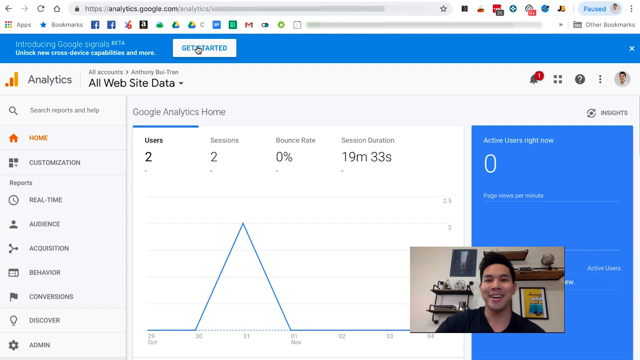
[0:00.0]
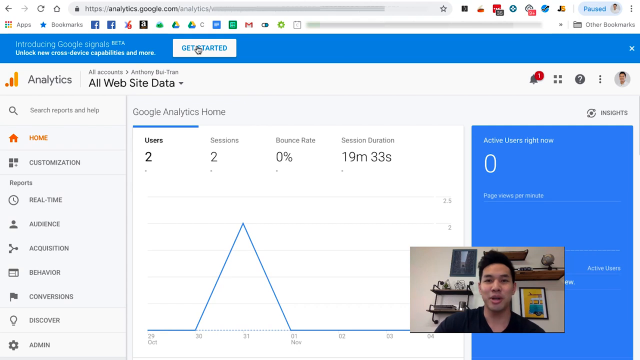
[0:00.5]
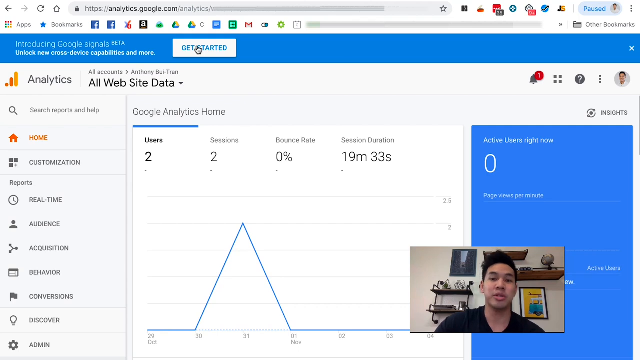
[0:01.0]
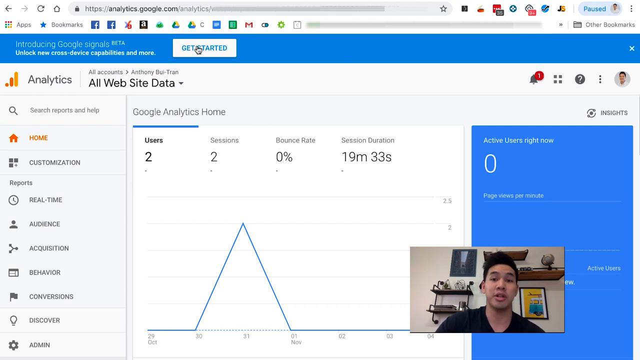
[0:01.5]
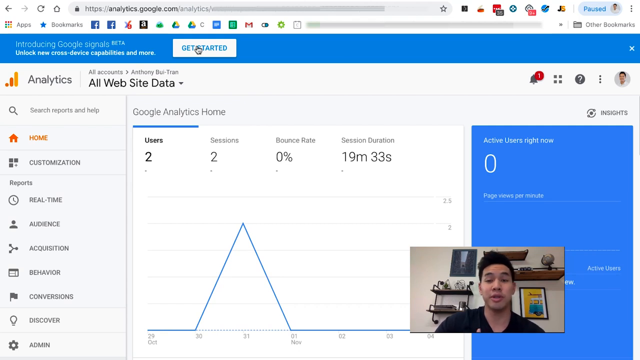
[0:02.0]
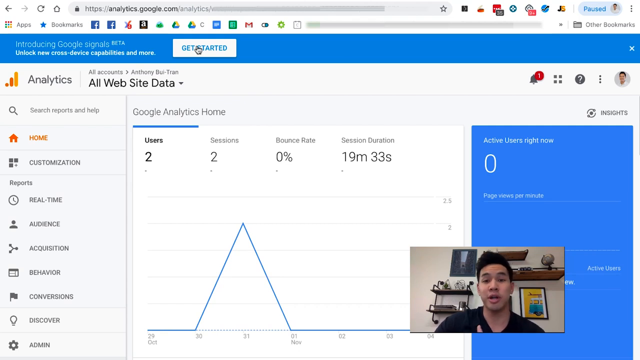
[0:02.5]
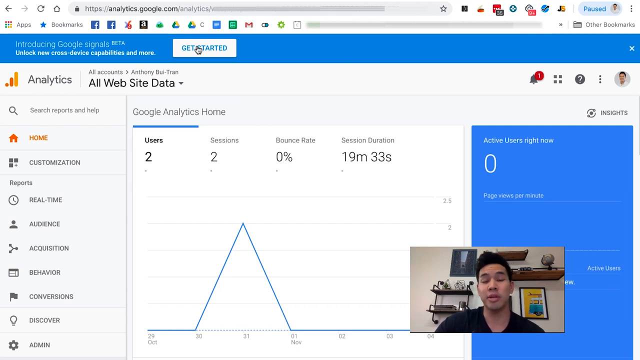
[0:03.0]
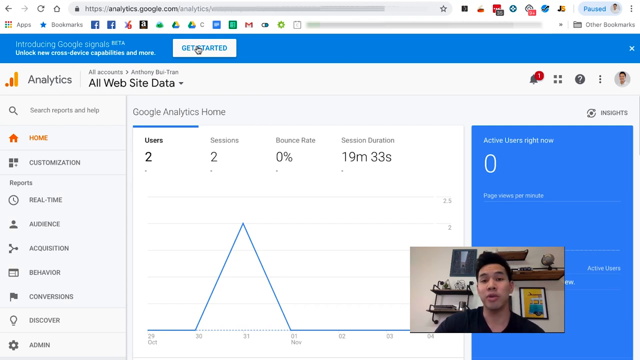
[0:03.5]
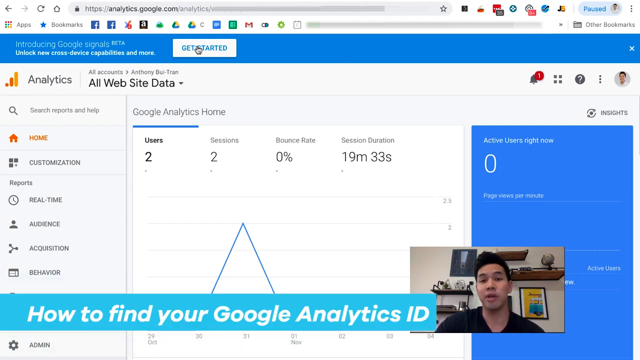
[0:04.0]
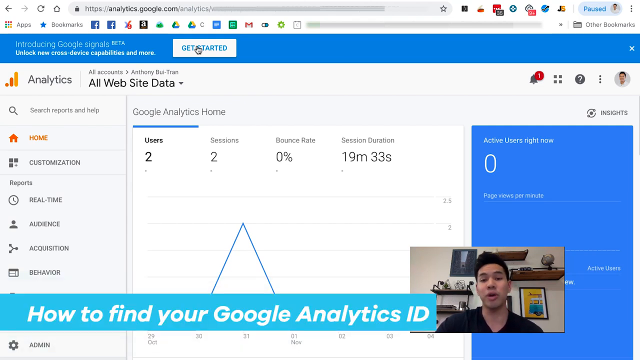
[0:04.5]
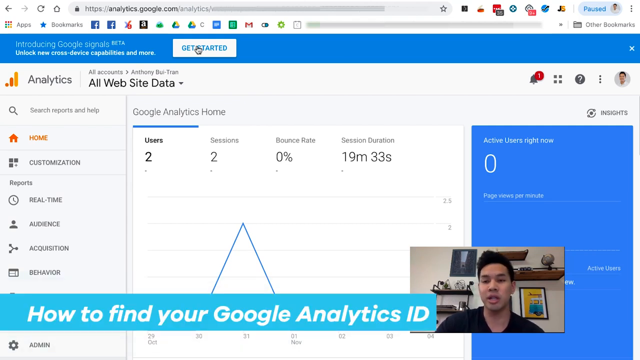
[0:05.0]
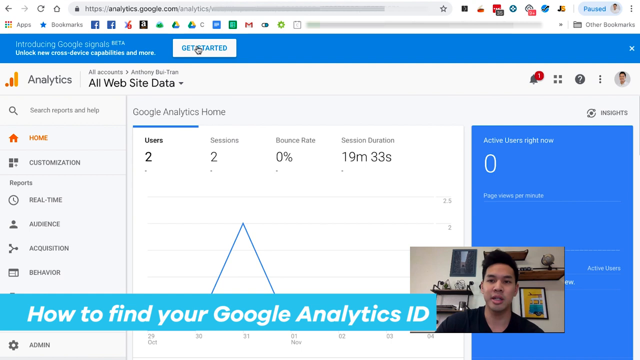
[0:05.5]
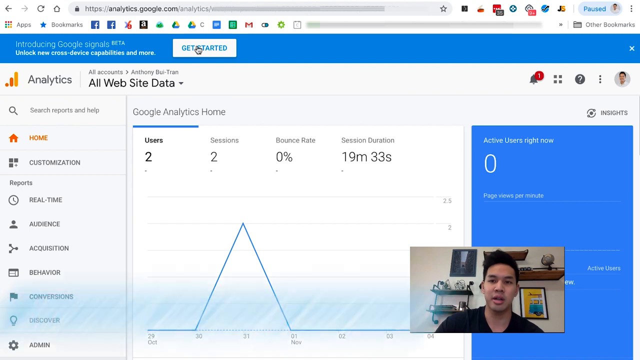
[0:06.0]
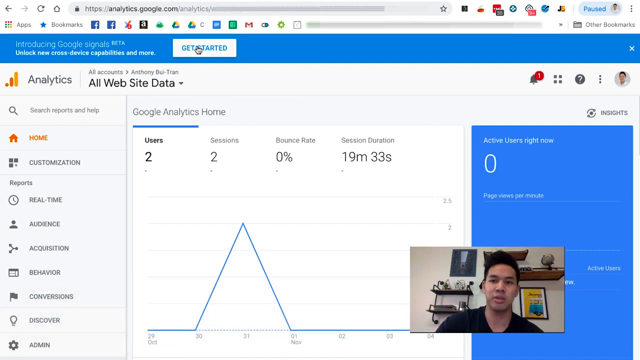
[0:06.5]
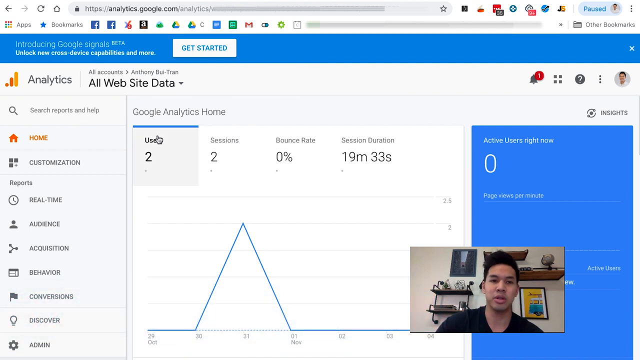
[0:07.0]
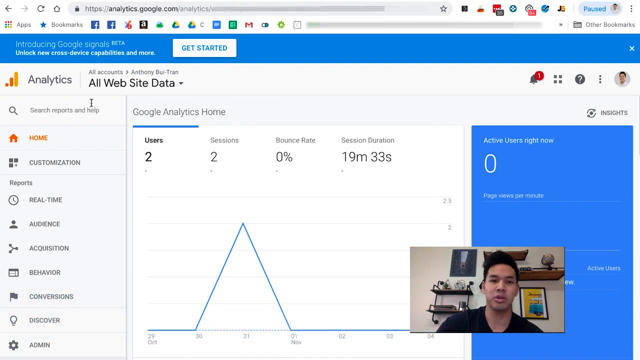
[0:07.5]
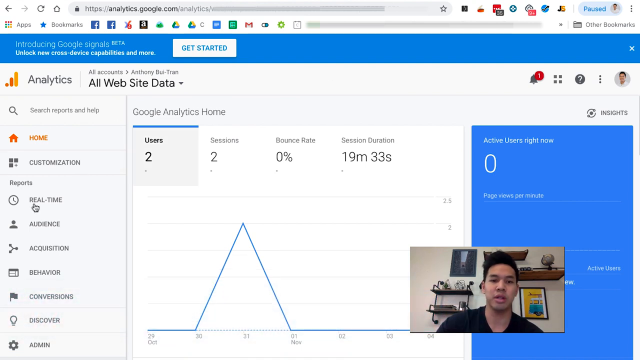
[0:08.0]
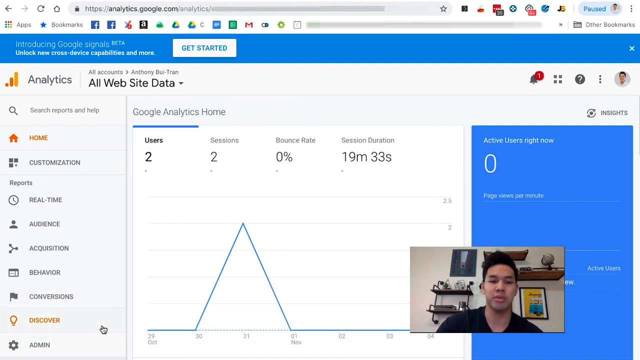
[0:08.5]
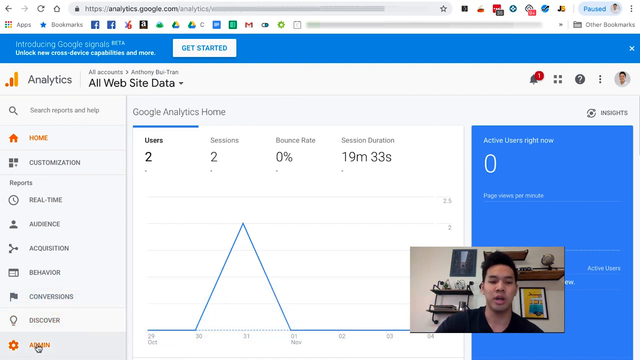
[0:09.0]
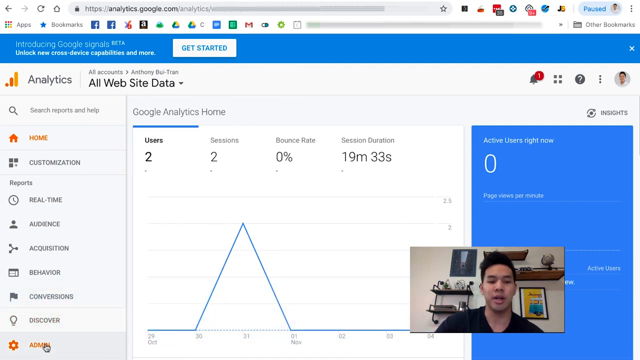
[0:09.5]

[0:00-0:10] A web browser window shows a Google Analytics page. The URL is analytics.google.com/analytics and the current page title is "All Website Data". In the center of the screen is a line chart, currently showing two users, two sessions, and a session duration of 19 minutes, 33 seconds. In the bottom right of the screen is a video window showing a man with dark hair in a black top, smiling at the screen. Behind him are various small shelves on a wall and two posters. The man speaks into the camera, and a title appears that reads "How to find your Google Analytics ID".